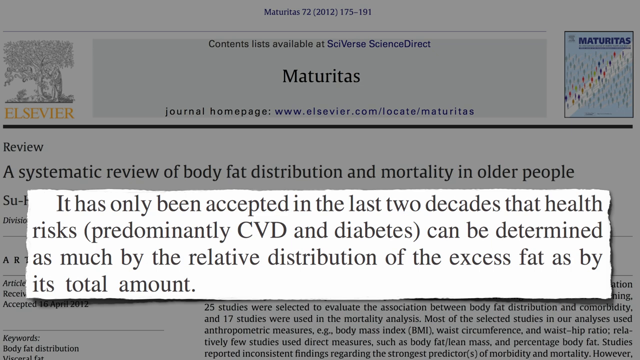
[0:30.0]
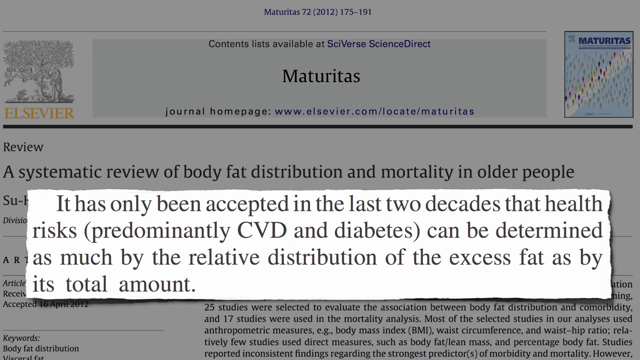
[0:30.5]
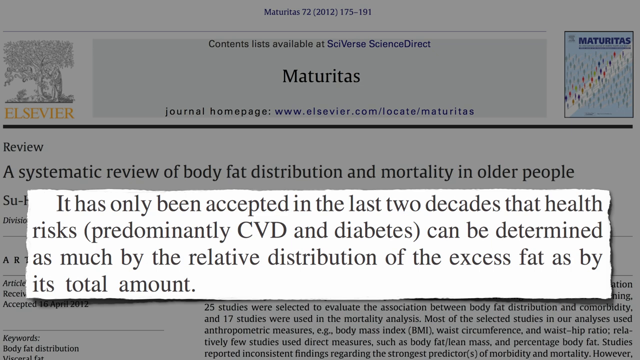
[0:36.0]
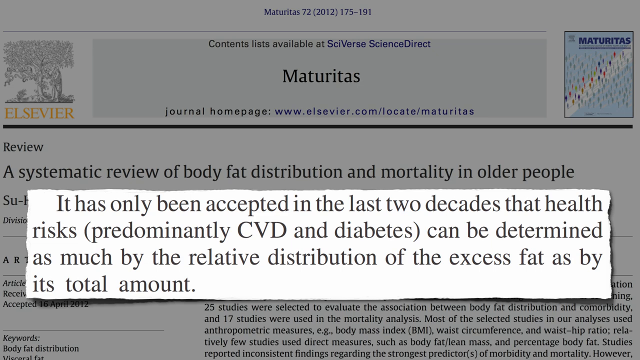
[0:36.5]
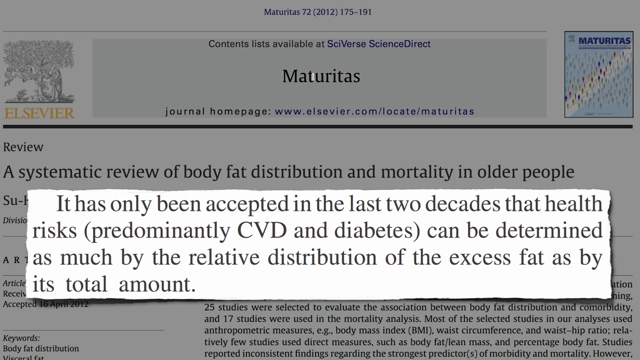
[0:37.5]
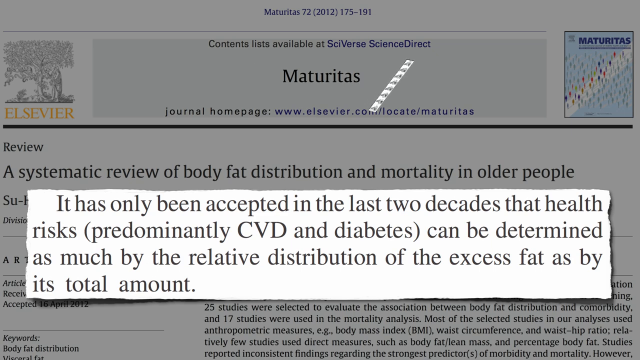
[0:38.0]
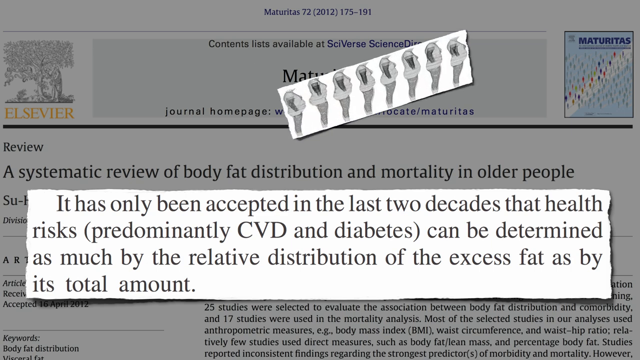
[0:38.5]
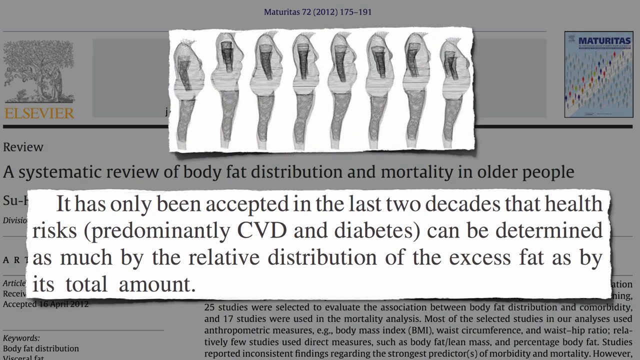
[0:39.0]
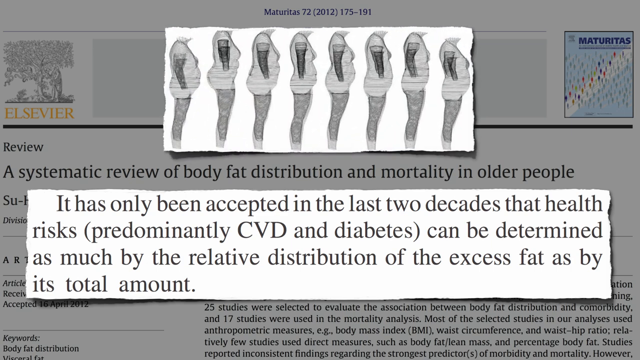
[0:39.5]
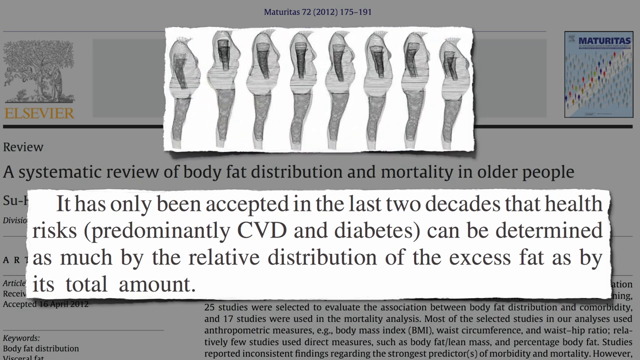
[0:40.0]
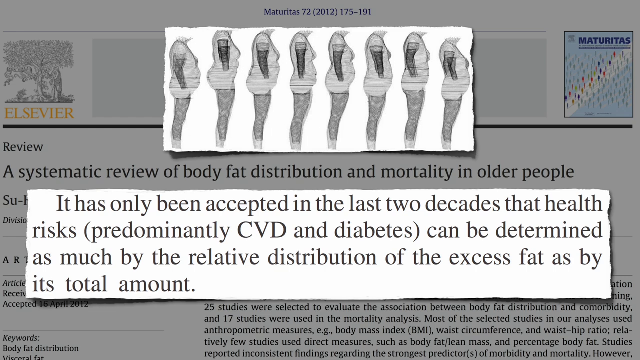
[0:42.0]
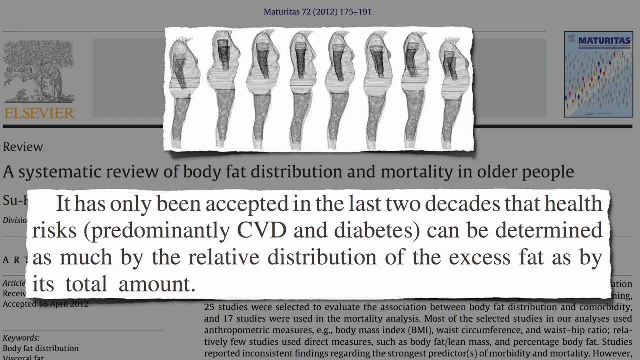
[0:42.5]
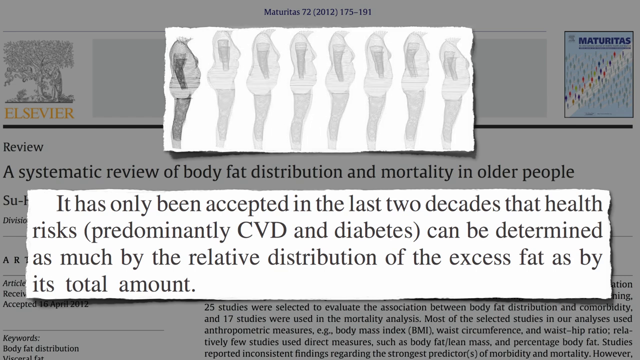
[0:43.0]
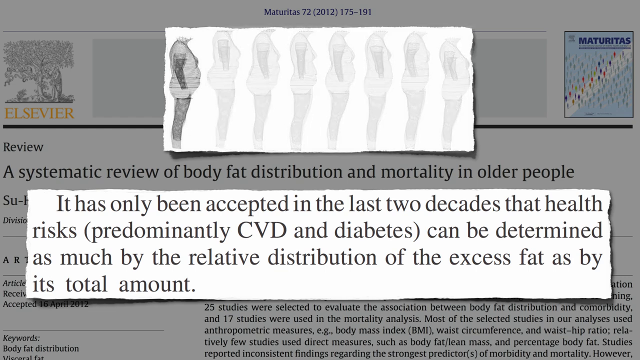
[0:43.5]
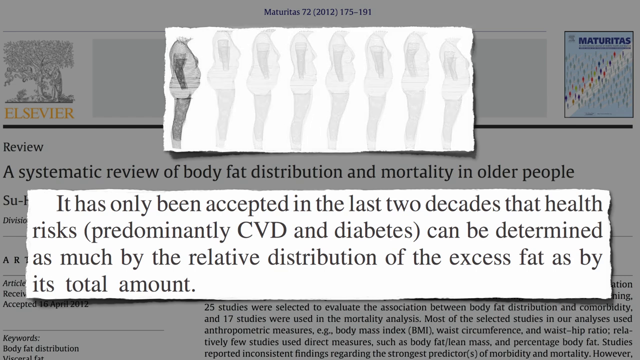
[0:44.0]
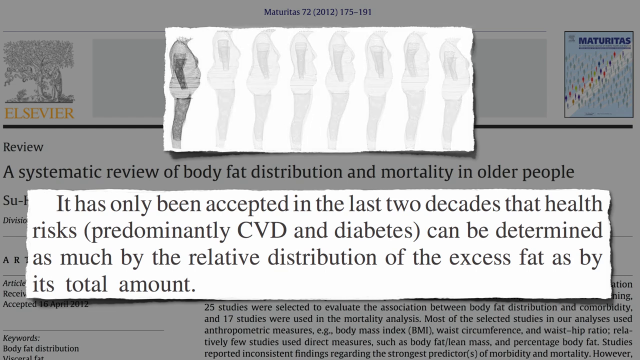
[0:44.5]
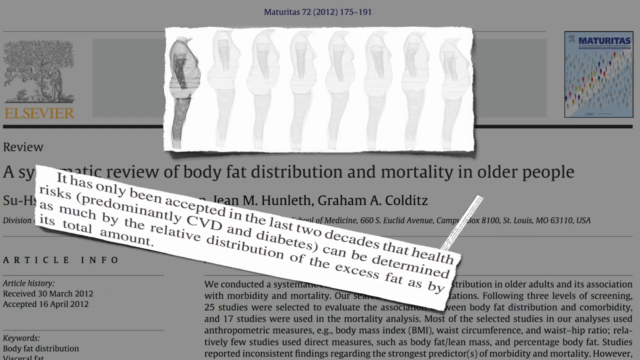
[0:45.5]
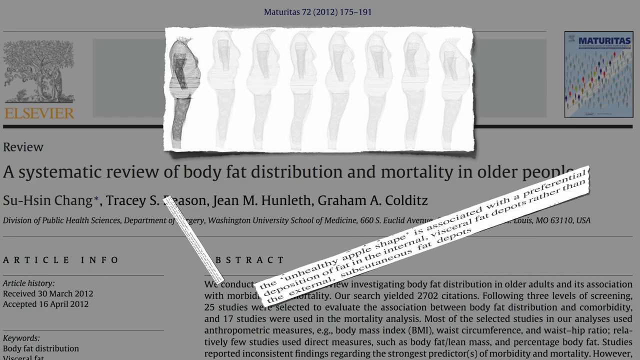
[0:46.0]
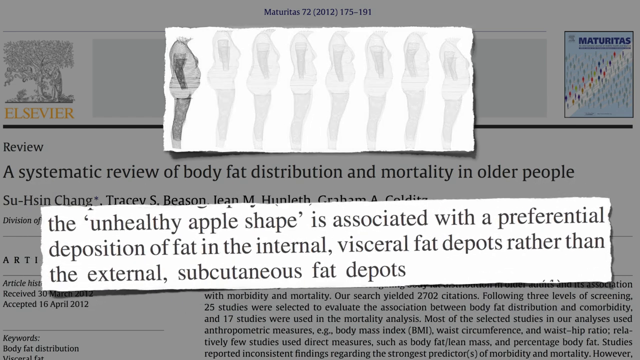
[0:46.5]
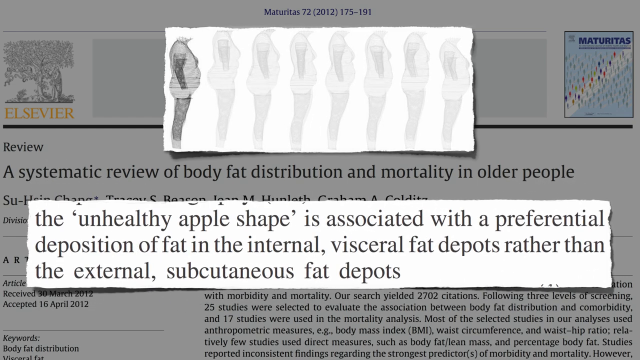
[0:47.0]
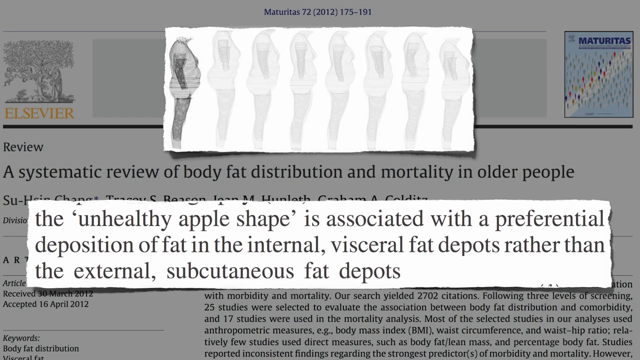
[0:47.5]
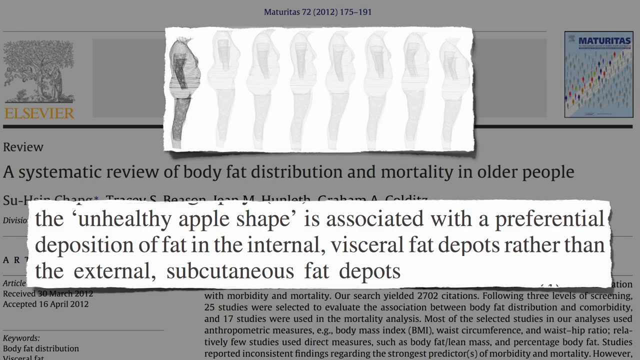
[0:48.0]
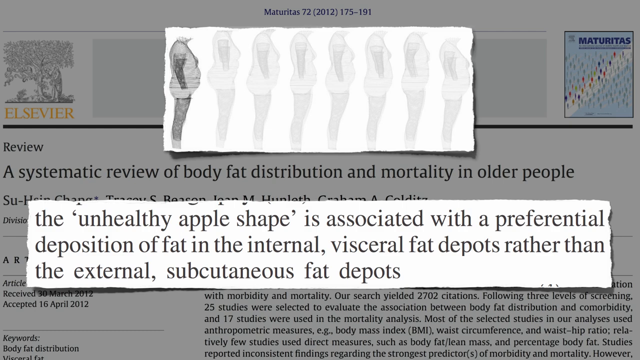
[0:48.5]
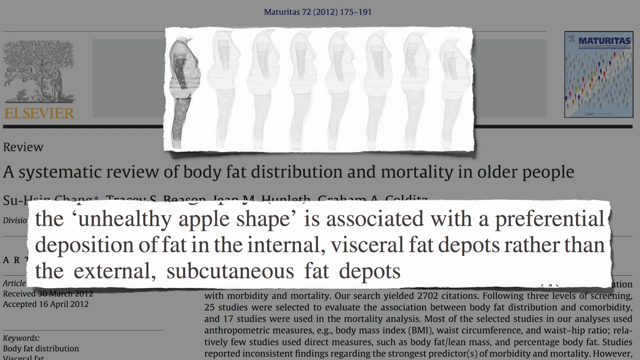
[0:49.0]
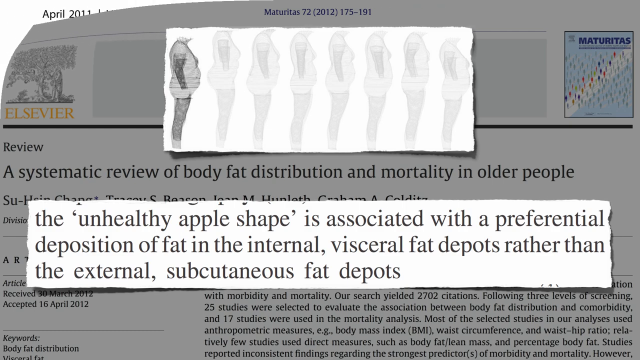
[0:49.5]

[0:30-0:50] Text on screen reads "It is only accepted in the last two decades that health risk, (predominantly CVD and diabetes) can be determined as much by the relative distribution of the excess fat as by its total amount." It appears to come from a medical journal or study. The video then transitions to show the bodies of different people in the upper part of the screen, illustrating body styles and how weight is distributed: some carry the weight higher in the body, some lower, and some fairly evenly throughout the whole body. Next, superimposed text reads "the unhealthy apple shape is associated with a preferential deposition of fat in the internal visceral fat deposits rather than the external subcutaneous fat deposits."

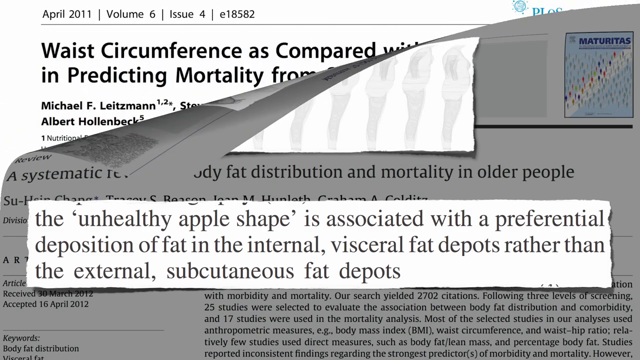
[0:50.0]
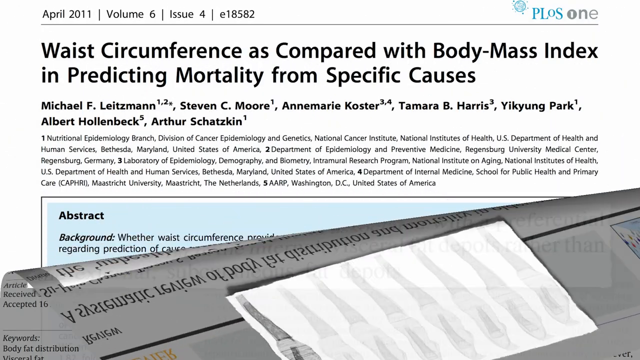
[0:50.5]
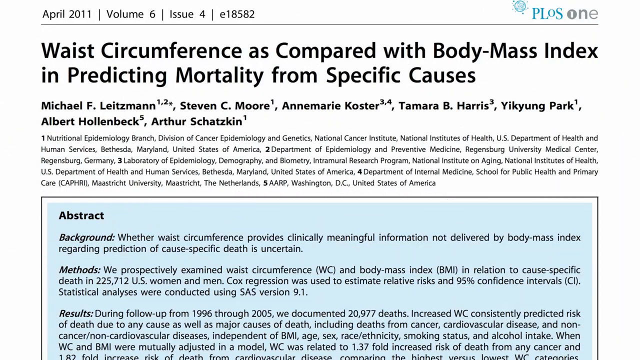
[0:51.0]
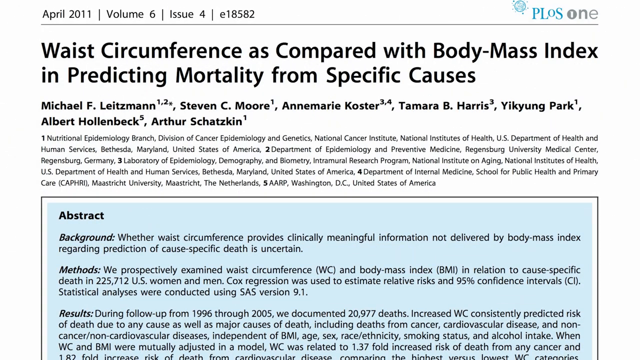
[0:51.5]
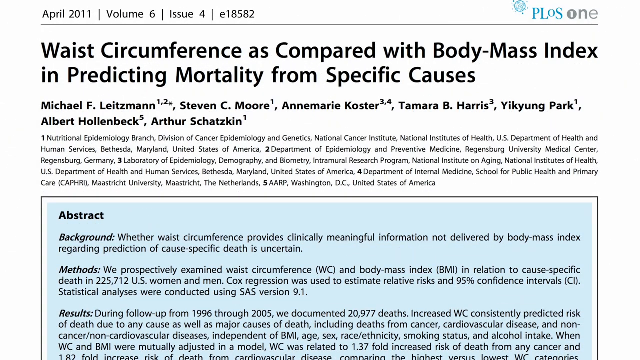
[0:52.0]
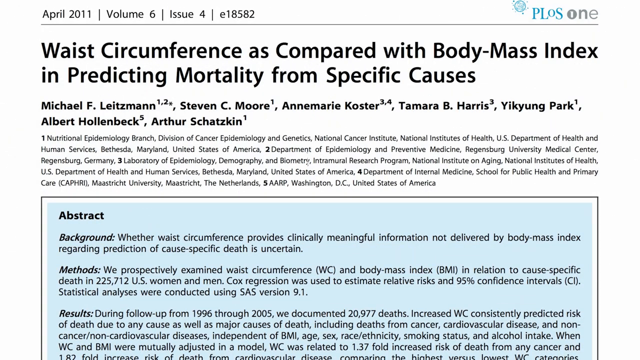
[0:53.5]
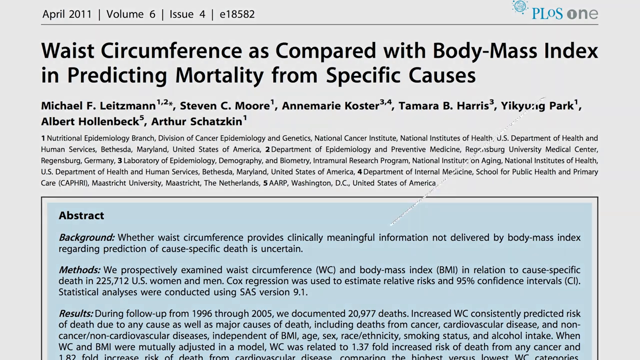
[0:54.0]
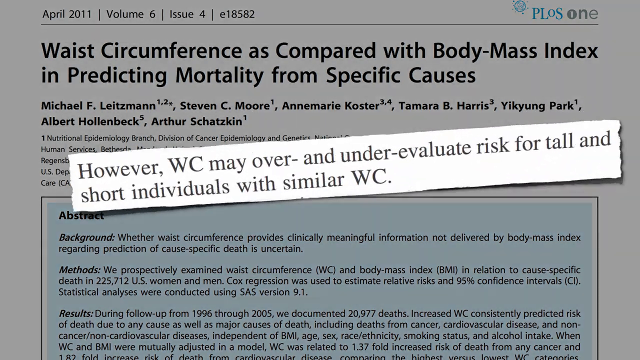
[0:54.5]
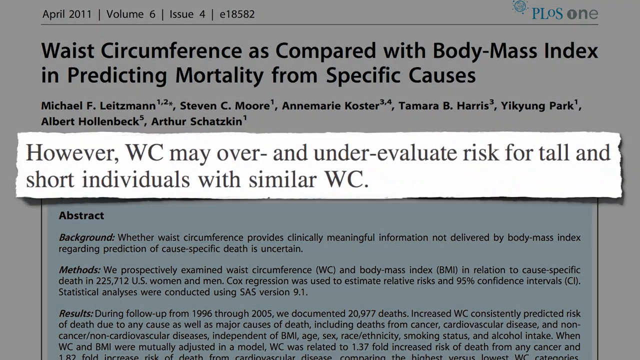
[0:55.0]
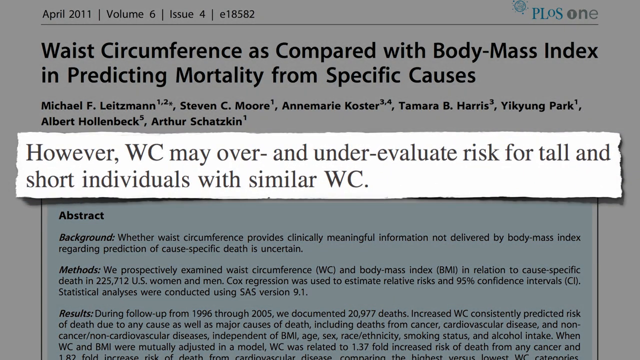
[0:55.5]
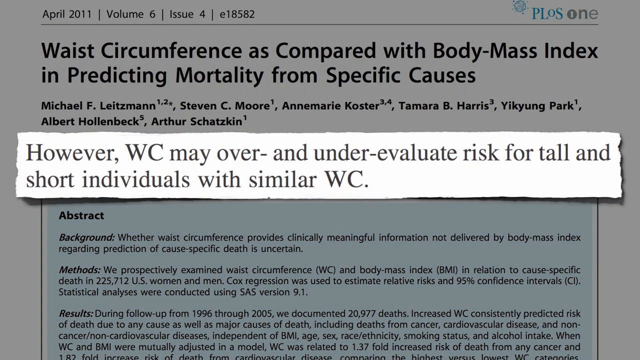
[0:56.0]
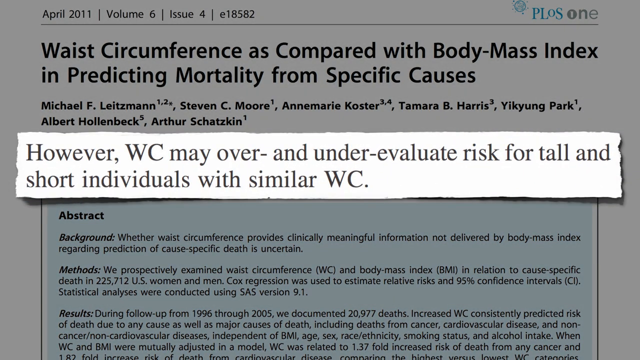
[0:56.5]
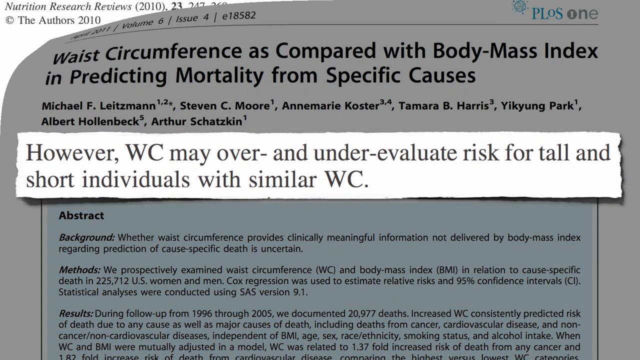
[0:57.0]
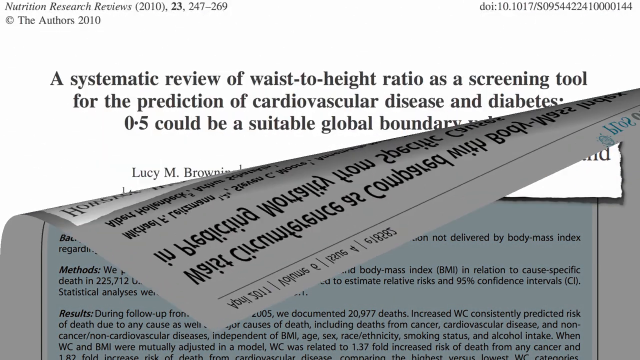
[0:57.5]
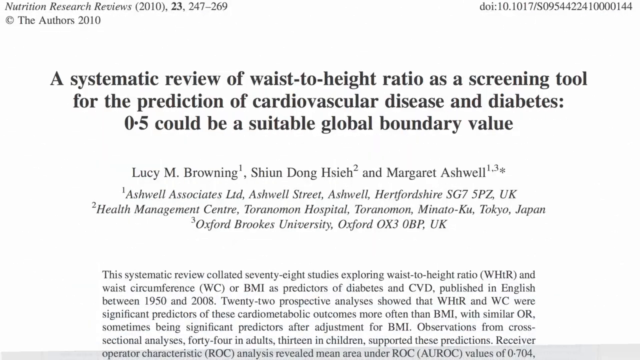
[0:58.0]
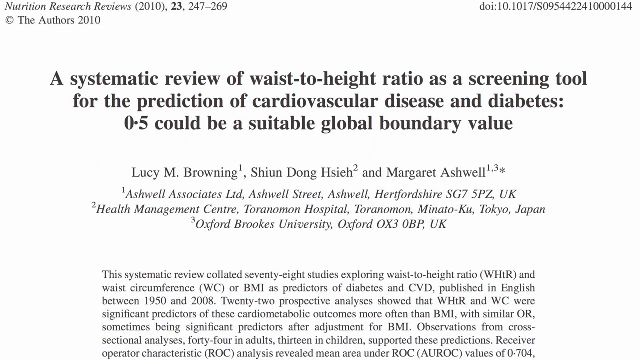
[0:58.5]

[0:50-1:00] Excerpts from a medical journal appear, with text at the bottom of the screen about body shapes and how they carry fat, in particular the unhealthy apple shape of the body. The video transitions to another page that looks like a medical journal, titled "waist circumference as compared with body mass index in predicting mortality from specific causes," with several authors listed underneath the title. The page then switches to another one titled "a systematic review of waist to height ratio as a screening tool for the prediction of cardiovascular diseases and diabetes. Zero to five could be a suitable global boundary value," again with several authors listed underneath. In the upper left is the title "nutrition research reviews," apparently the publication, and in the upper right is the document number.